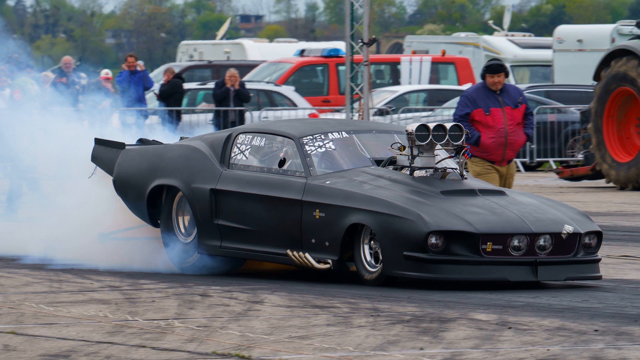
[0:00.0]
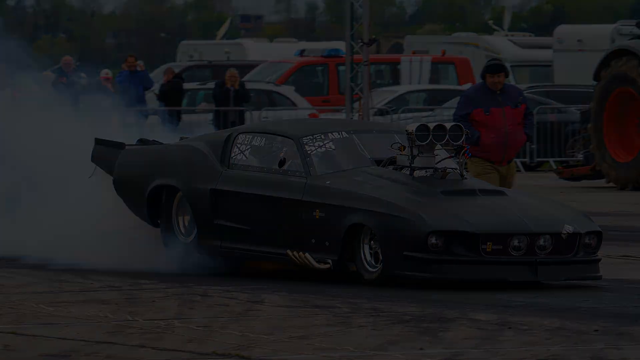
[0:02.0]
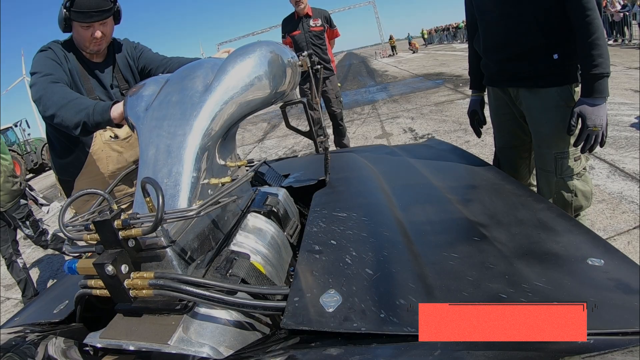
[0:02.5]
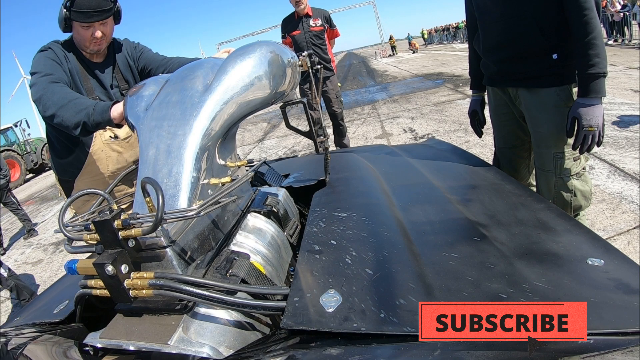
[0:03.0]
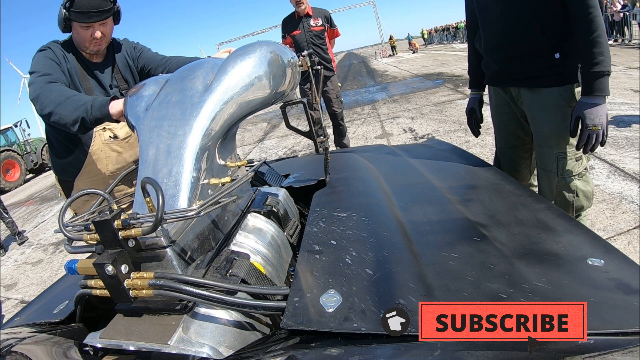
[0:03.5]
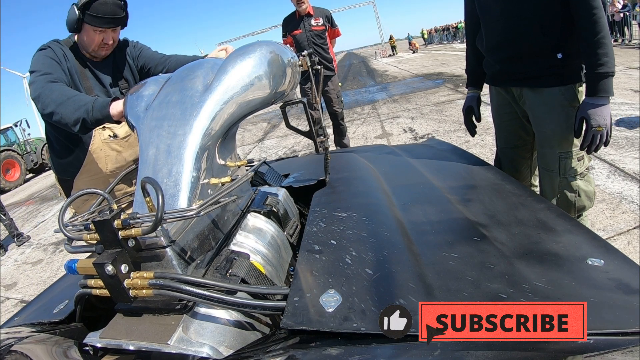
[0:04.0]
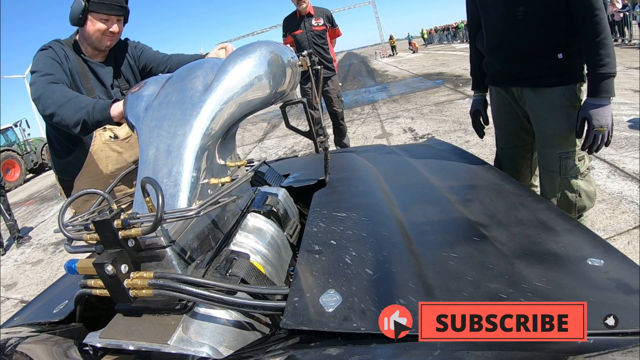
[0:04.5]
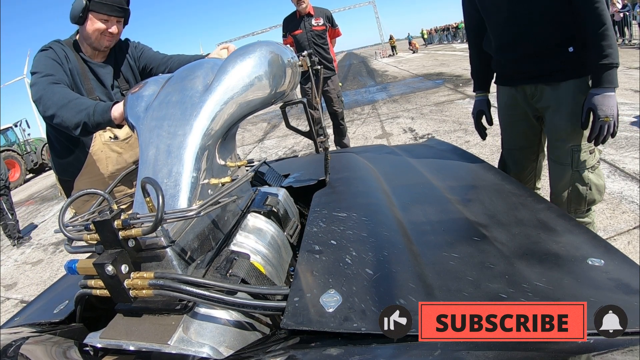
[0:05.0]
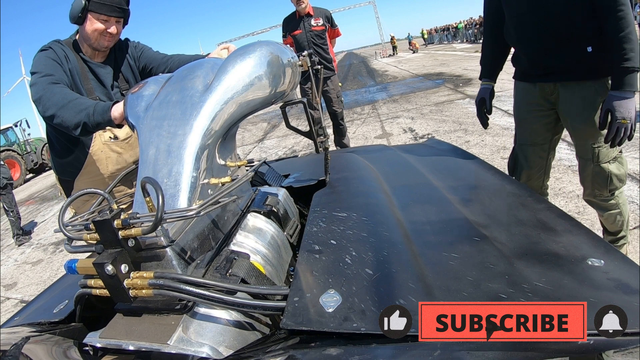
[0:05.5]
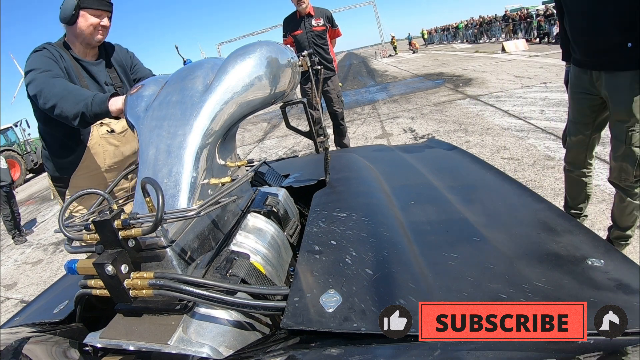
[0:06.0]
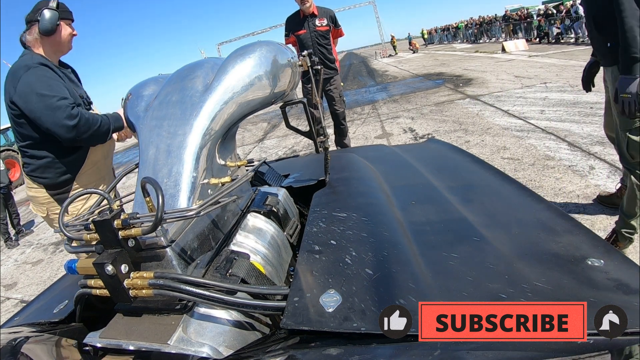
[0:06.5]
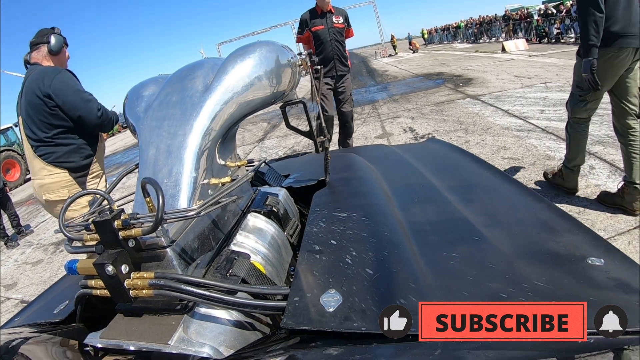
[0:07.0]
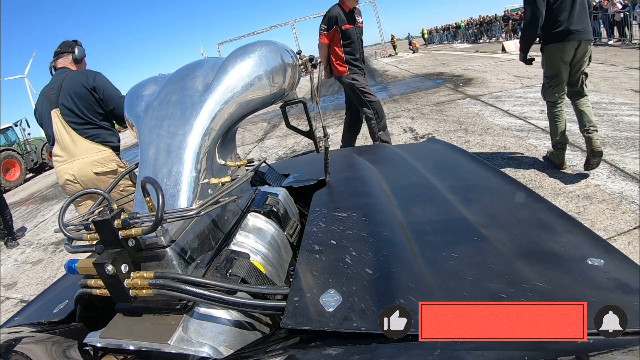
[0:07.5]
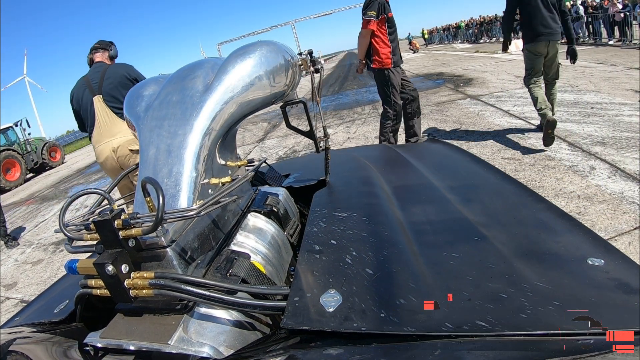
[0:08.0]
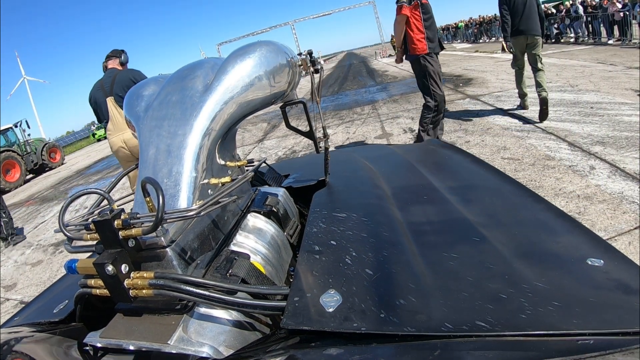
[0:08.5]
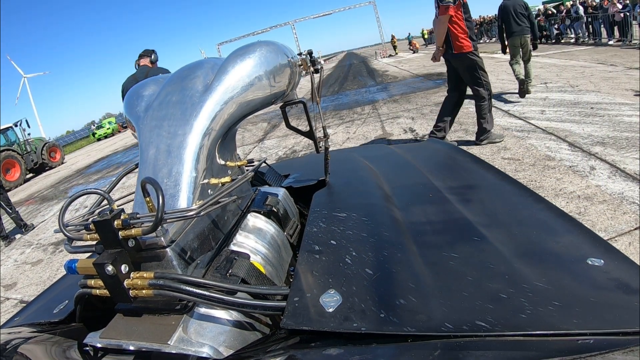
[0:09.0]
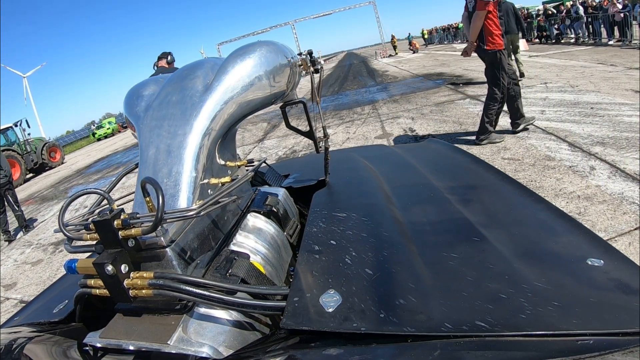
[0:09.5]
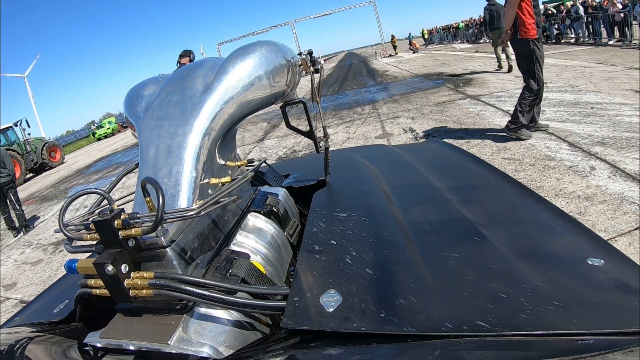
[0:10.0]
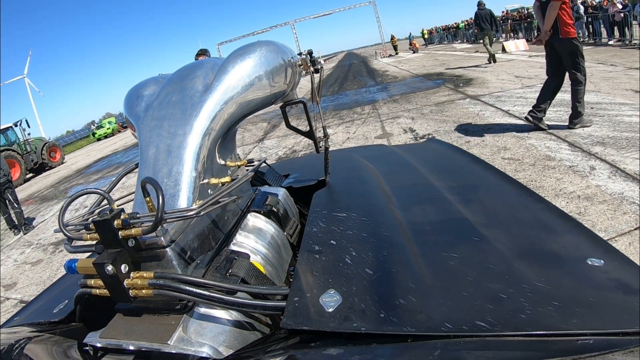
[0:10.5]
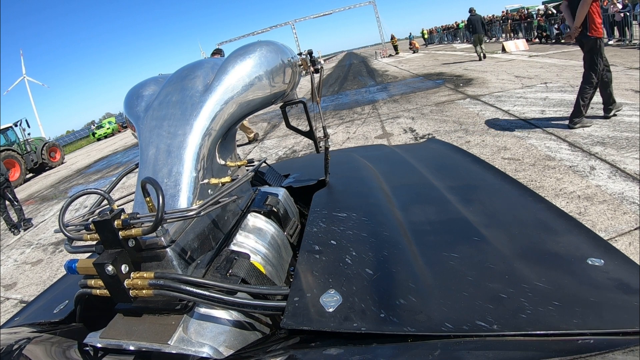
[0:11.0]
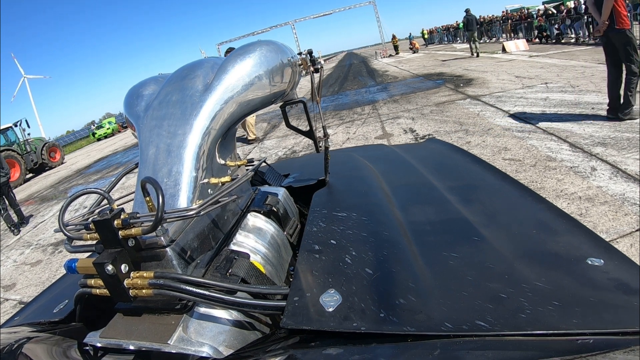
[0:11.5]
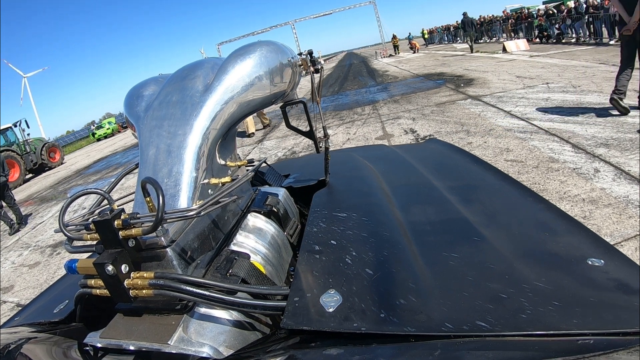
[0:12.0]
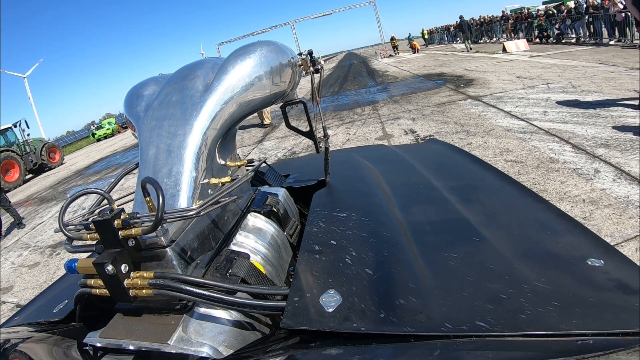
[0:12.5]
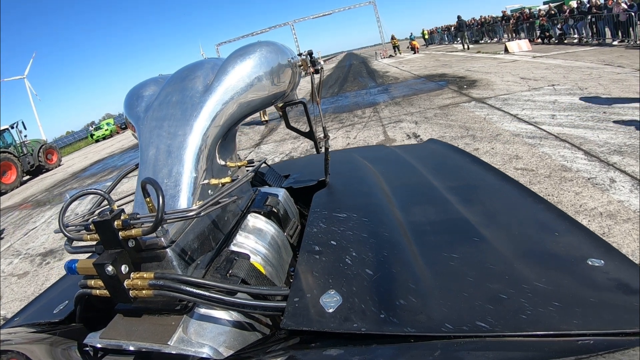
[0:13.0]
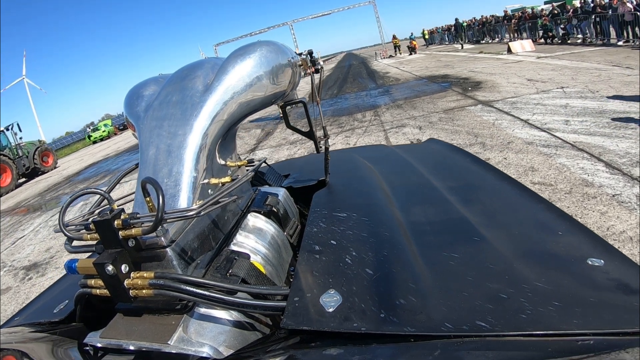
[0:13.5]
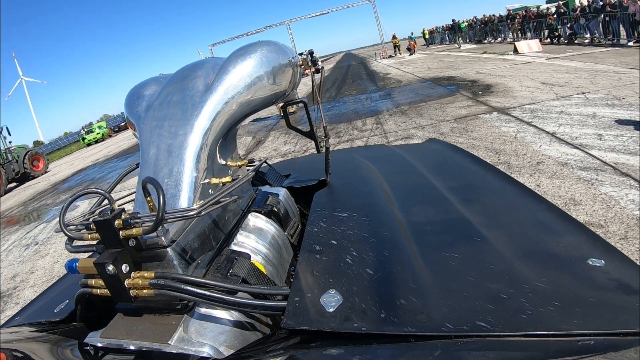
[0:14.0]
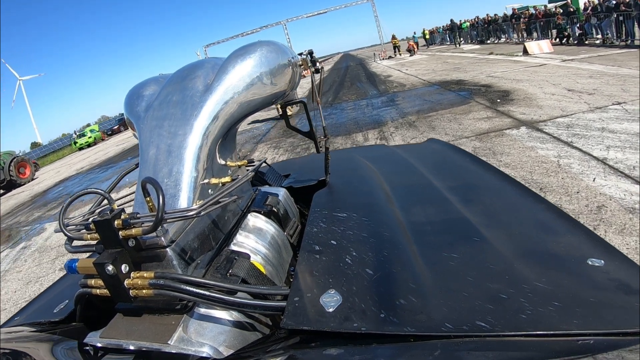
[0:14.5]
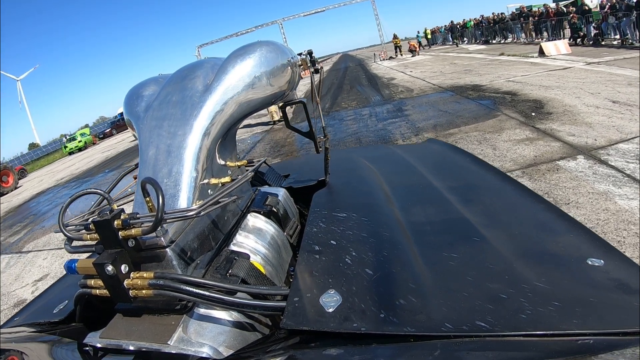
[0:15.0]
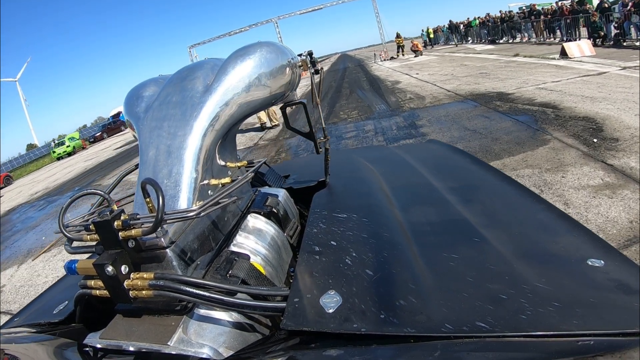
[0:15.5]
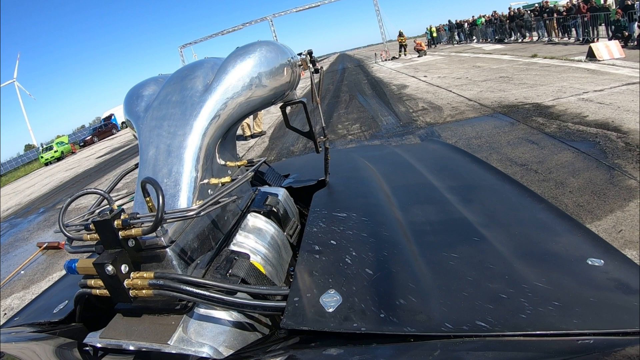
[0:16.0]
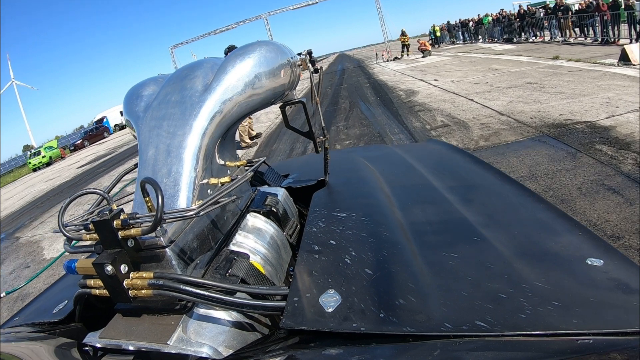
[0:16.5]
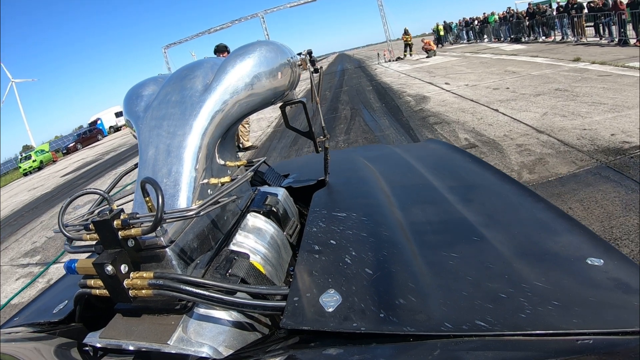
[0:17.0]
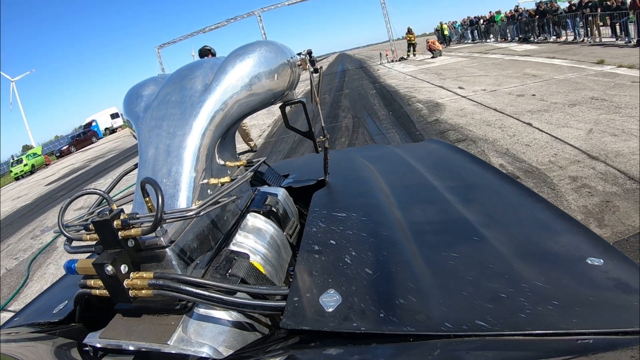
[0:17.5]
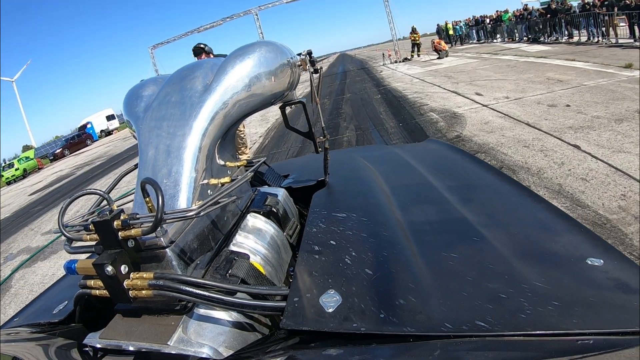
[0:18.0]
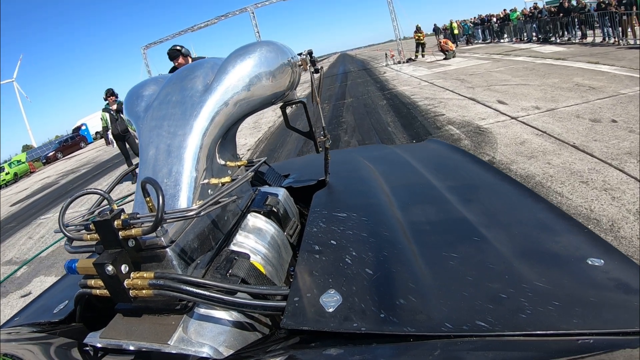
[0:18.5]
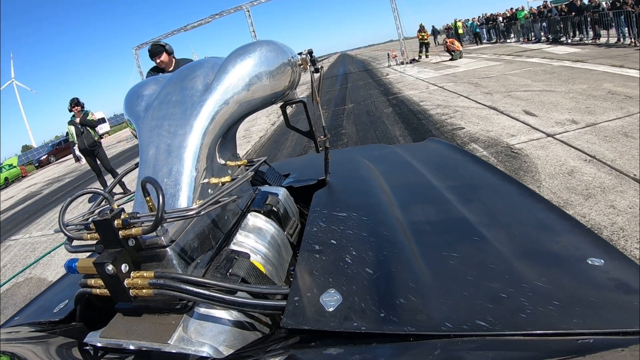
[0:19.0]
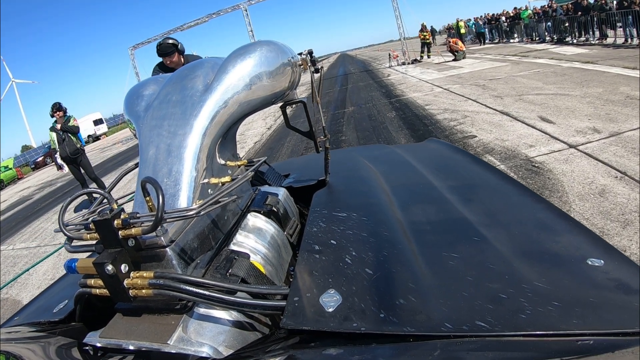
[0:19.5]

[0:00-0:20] A grey car with an engine on top of its hood is the focus; it looks very powerful and seems to be a hot rod. A few men are around it. The view first appears to be from the driver's perspective, then switches to the view of someone else looking at the vehicle. The car looks like it is on a drag racing strip, and smoke comes out of the back of the car. There is some writing on the windows on the front and on the side. The men wear something over their ears to block the loud sound, and there seems to be a crowd on the right-hand side watching the drag racing. Cars are in the background, probably belonging to the people who have come to watch. The gray car leans down in the front and goes up in the back. The man standing next to the car has on a blue and red jacket and tan pants.